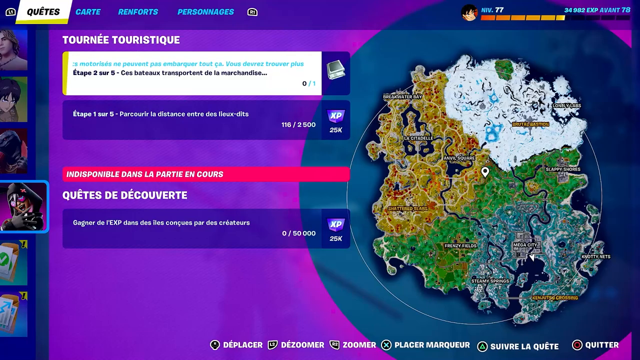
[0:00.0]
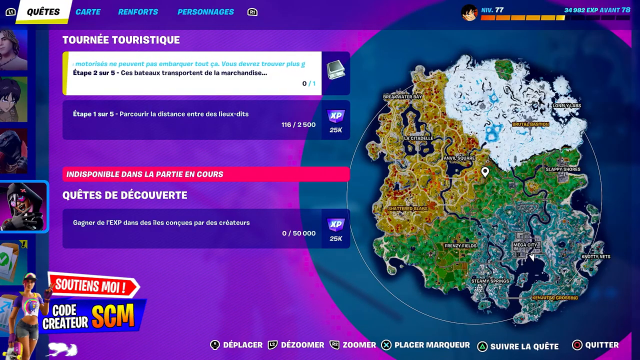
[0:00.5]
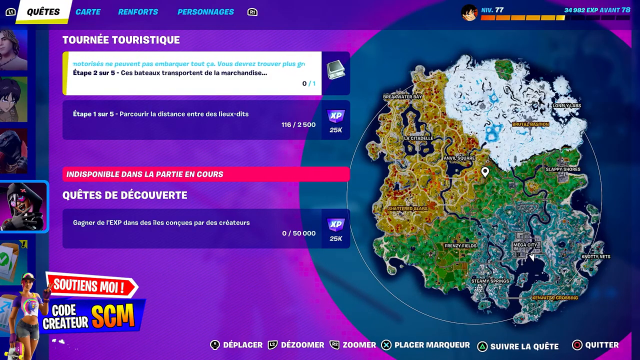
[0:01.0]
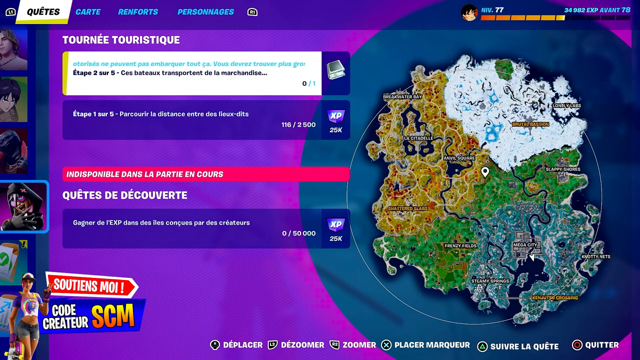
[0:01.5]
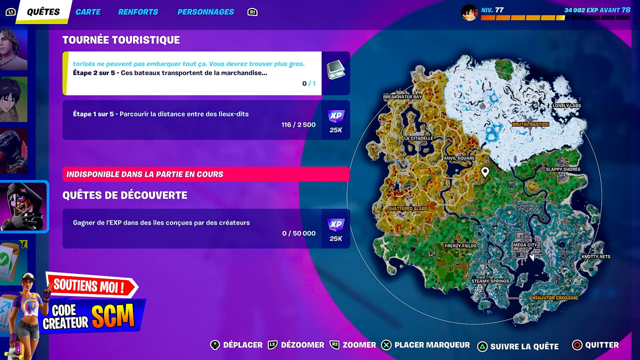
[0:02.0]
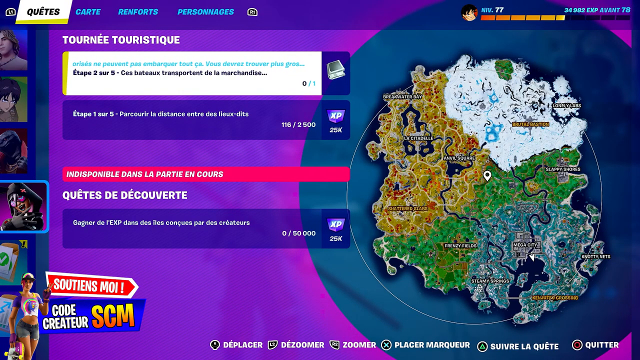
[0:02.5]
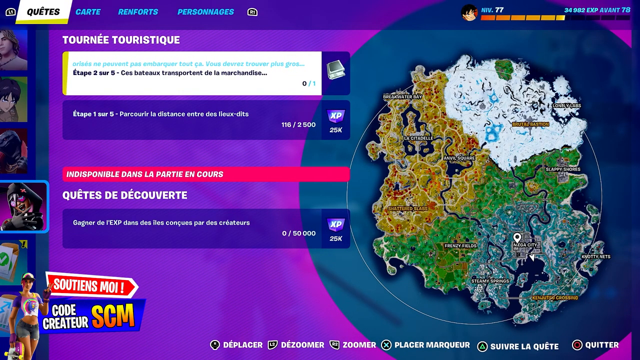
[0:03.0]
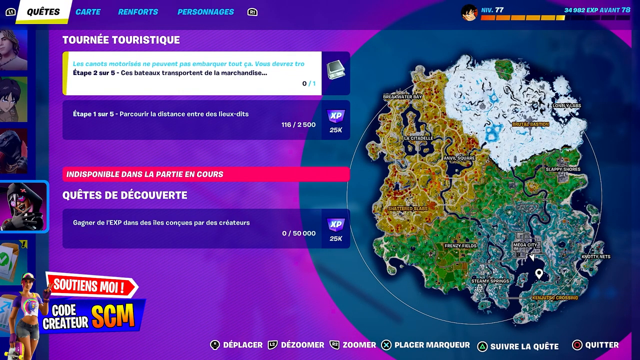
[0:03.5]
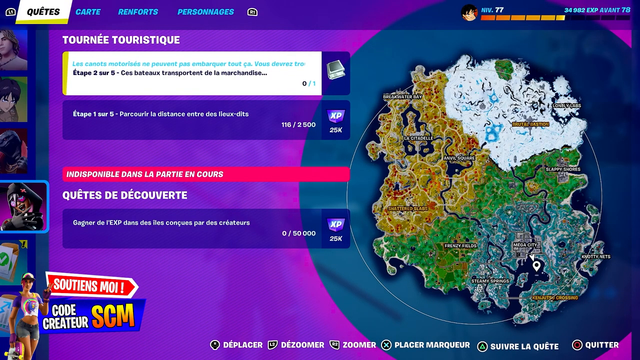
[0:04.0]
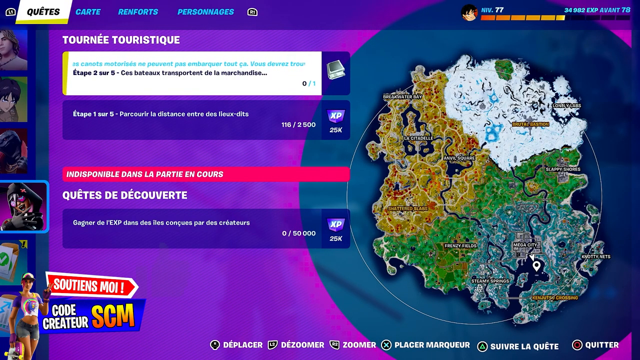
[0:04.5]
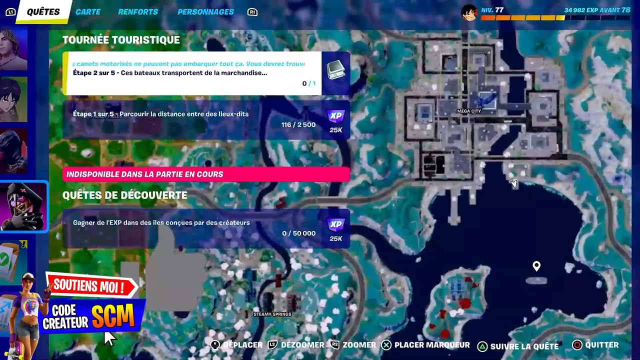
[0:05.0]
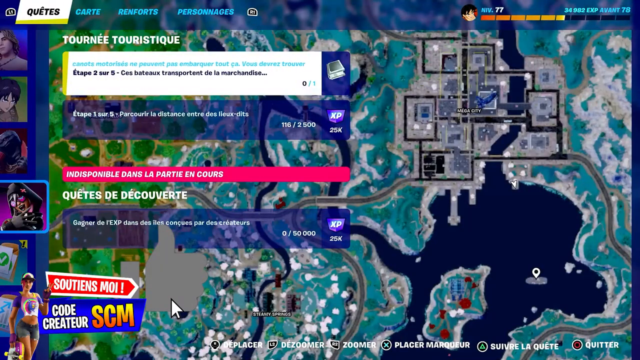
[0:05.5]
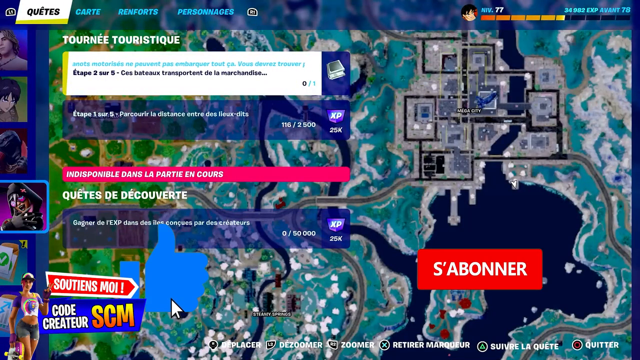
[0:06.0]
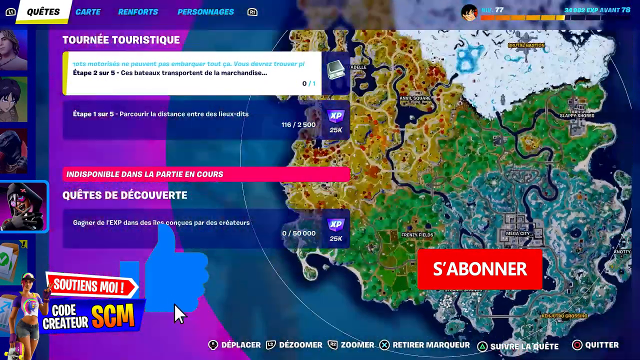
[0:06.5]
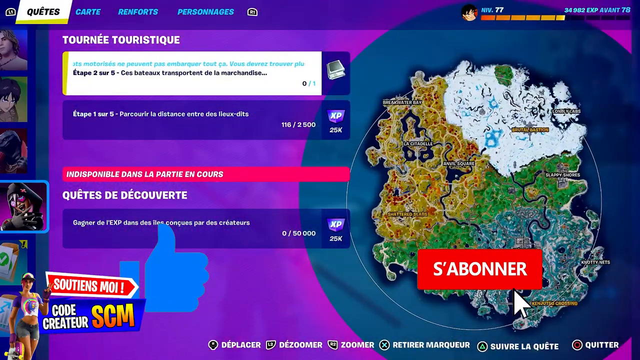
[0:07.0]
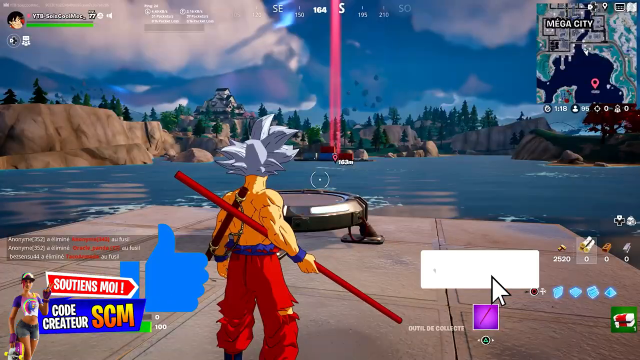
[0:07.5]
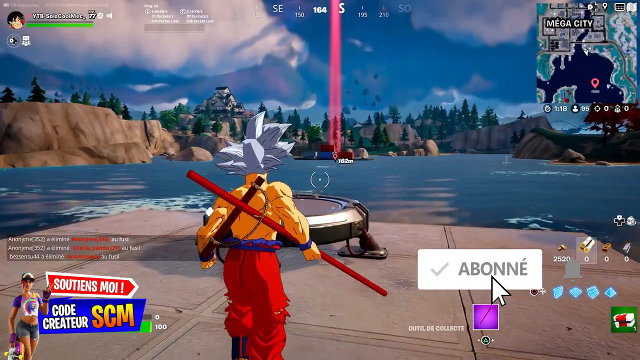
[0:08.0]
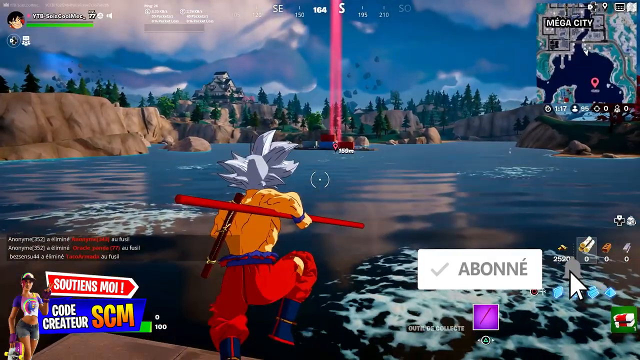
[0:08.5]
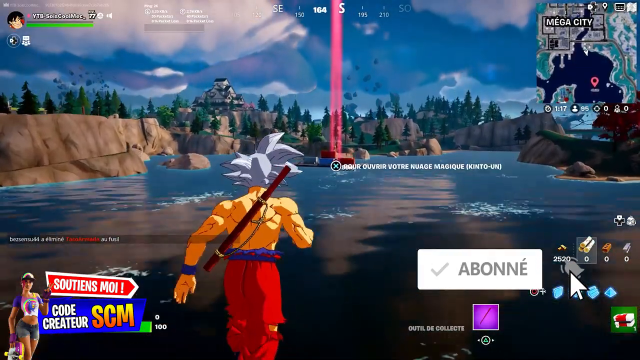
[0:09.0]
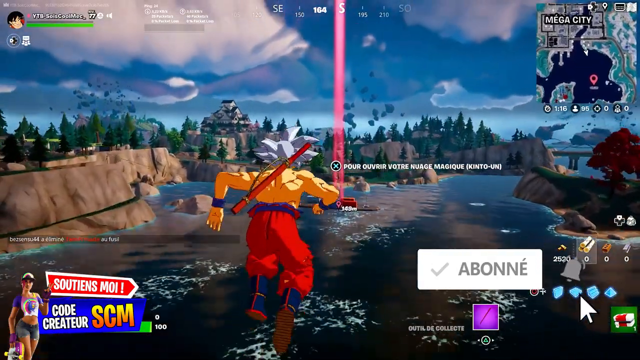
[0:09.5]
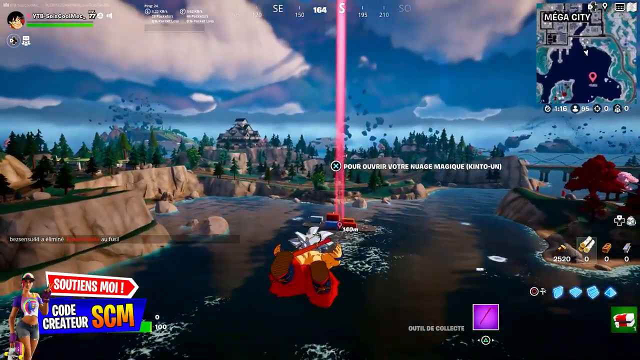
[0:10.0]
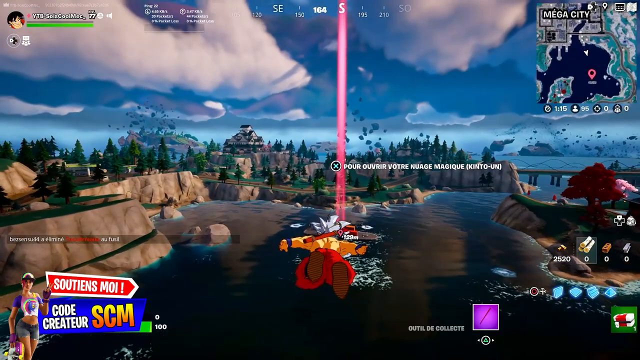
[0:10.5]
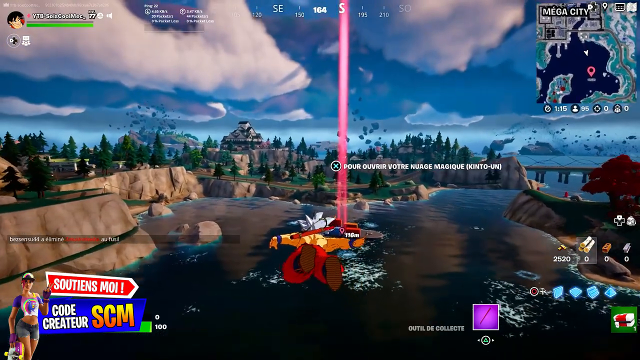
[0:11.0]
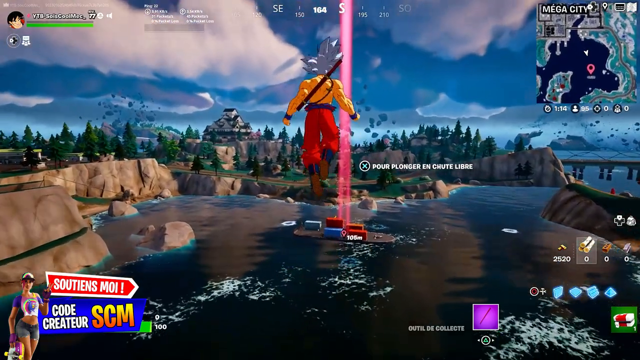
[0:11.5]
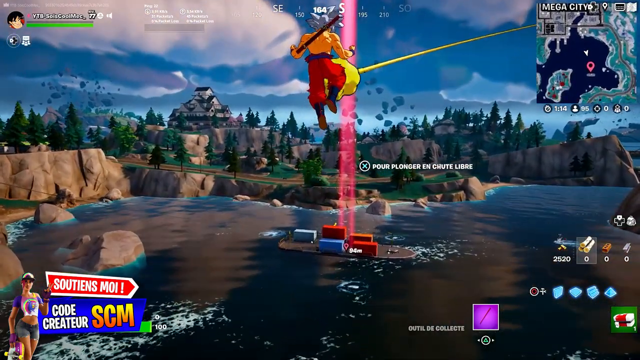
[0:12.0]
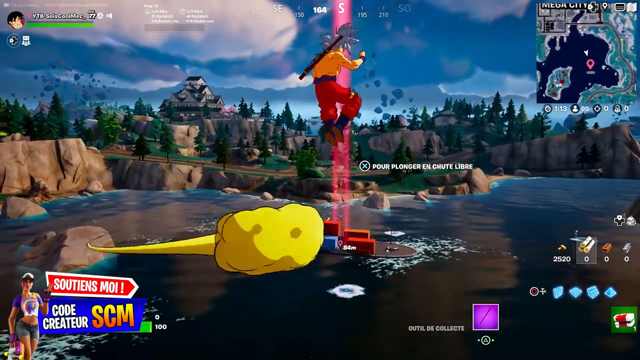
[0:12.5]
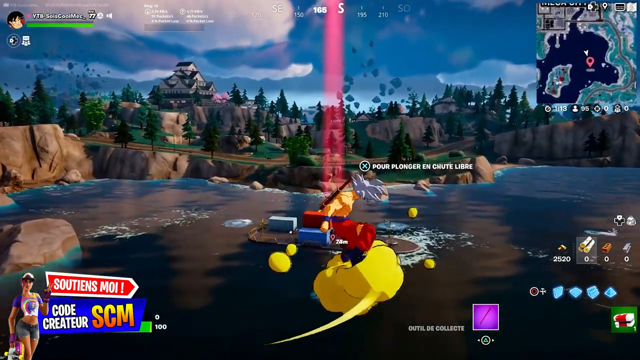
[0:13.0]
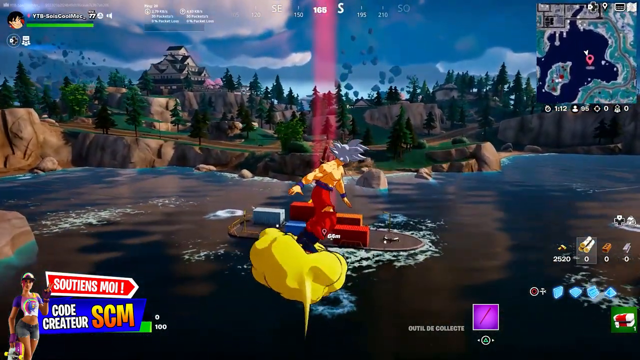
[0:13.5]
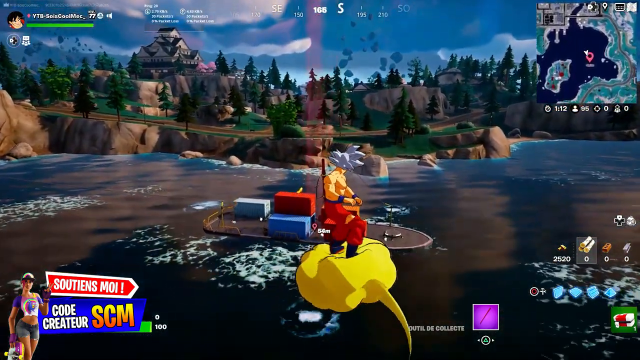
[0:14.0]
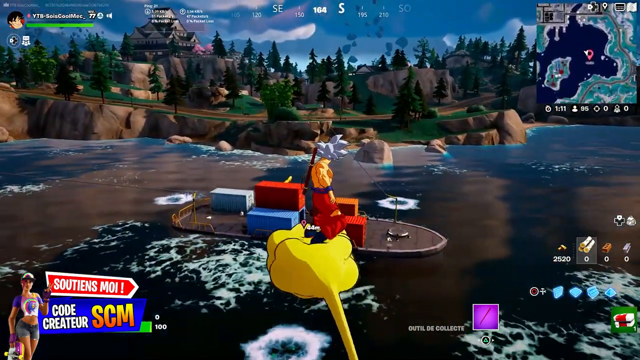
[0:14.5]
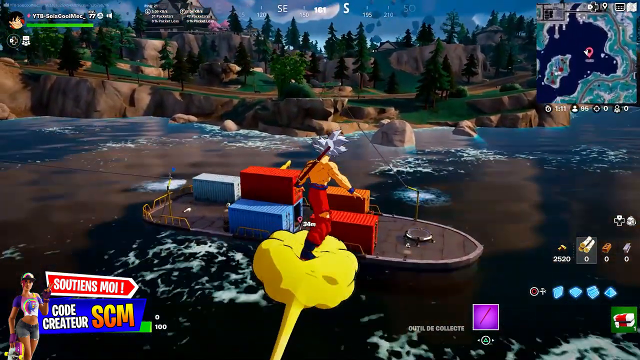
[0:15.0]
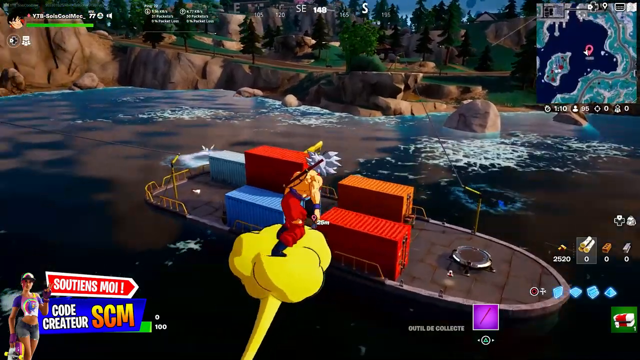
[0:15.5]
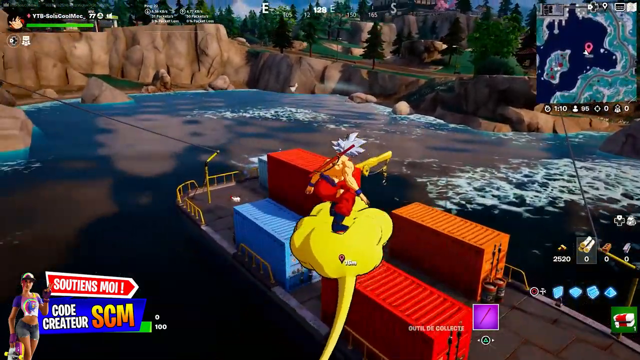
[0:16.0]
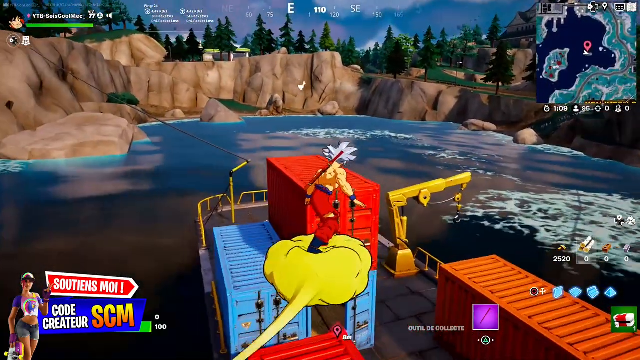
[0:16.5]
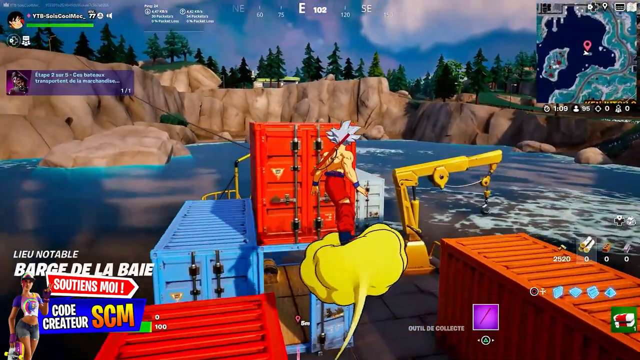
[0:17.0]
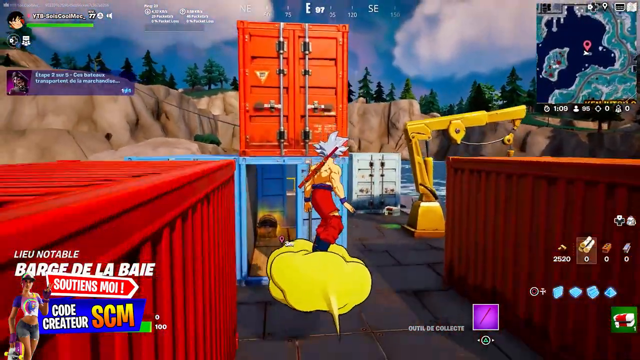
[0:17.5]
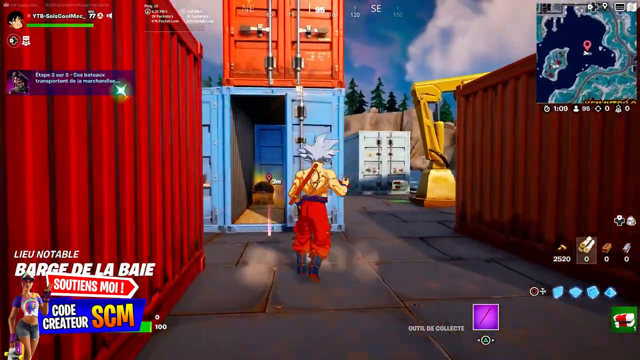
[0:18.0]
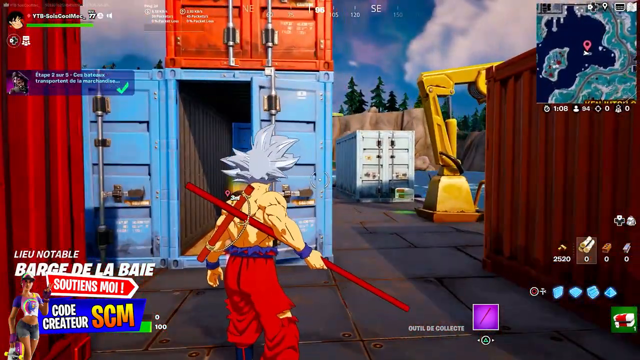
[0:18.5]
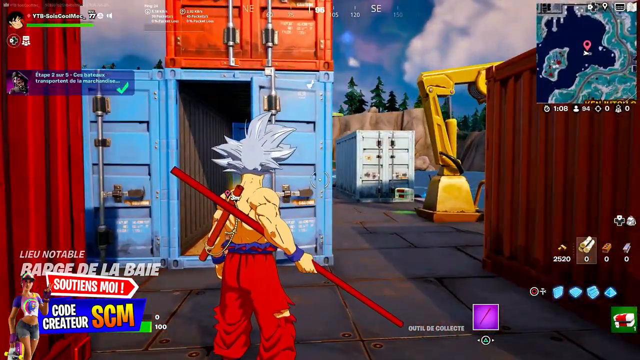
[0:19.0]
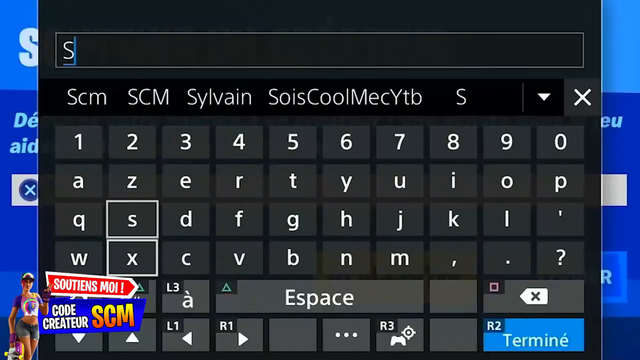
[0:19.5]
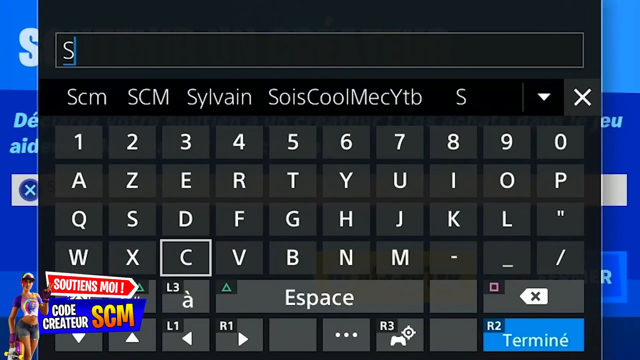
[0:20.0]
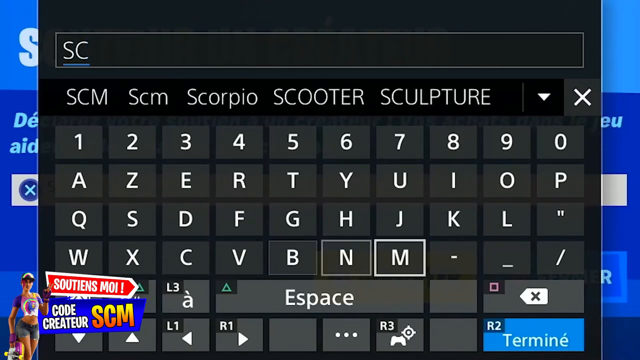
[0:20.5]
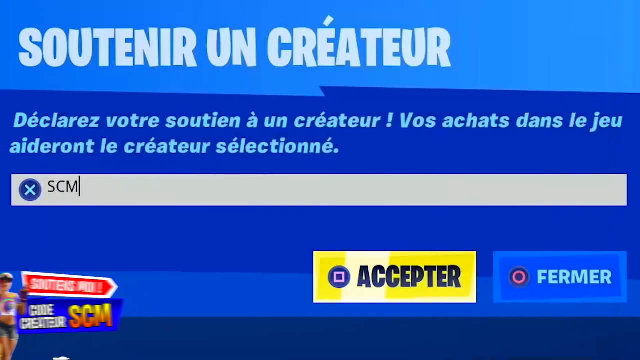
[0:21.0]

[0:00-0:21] Most of the title text is in another language that looks like Spanish, and the logo reads "Fortnite," marking it as a Fortnite game. A character is chosen, and then what may be a location selection appears: a map with a cursor moving over it as the player works out where to go. A spot is clicked as the destination, the game takes the player there, and the character comes alive. The character flies through the sky like Superman, then runs up and jumps off what looks like a mini trampoline, appearing to fly over toward some water where it looks like it is going to land. A yellow cloud with a little tail comes by and drifts him to a tugboat ship carrying cargo. The ship has equipment on it, apparently a crane and cargo containers like those that go on trains. The view then goes to the player's screen where his information can be entered, and it looks like some sort of mission is about to take place.